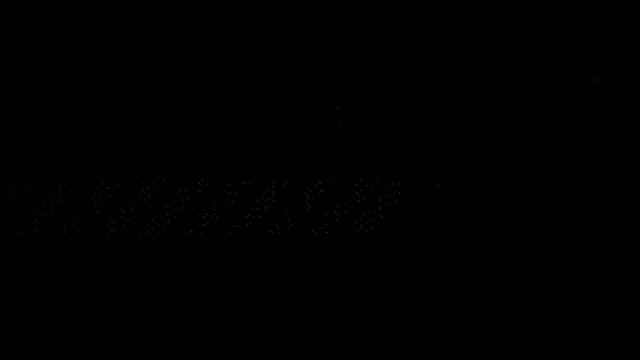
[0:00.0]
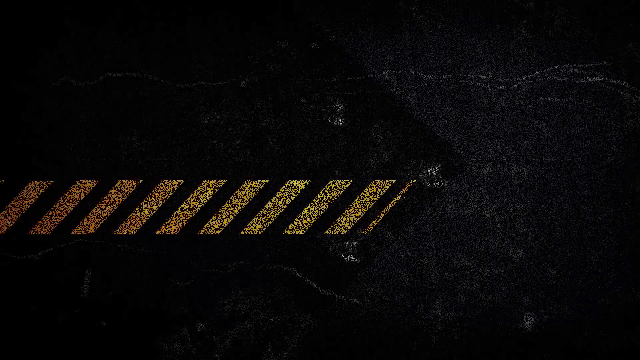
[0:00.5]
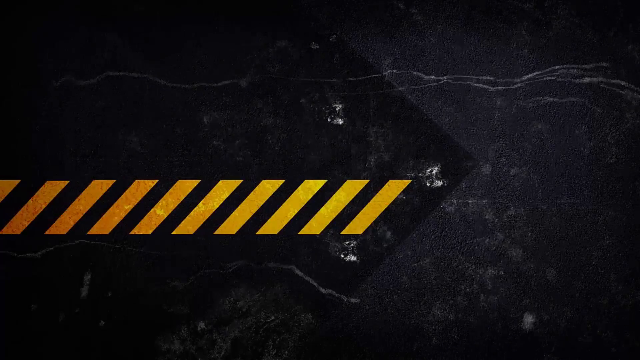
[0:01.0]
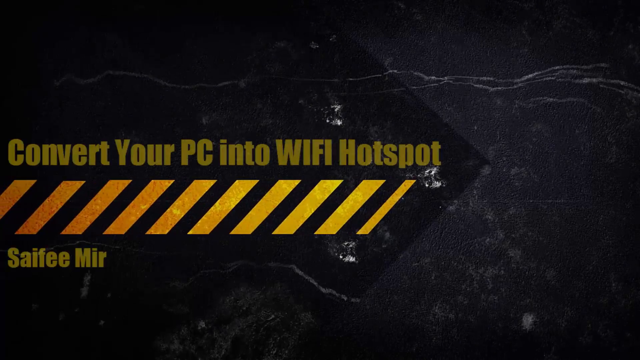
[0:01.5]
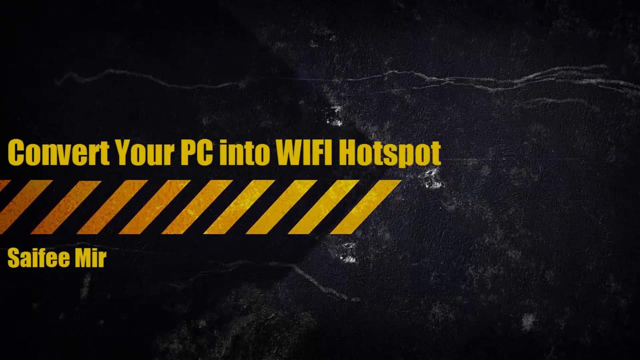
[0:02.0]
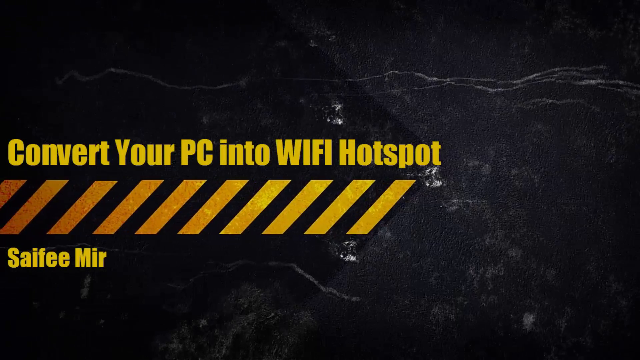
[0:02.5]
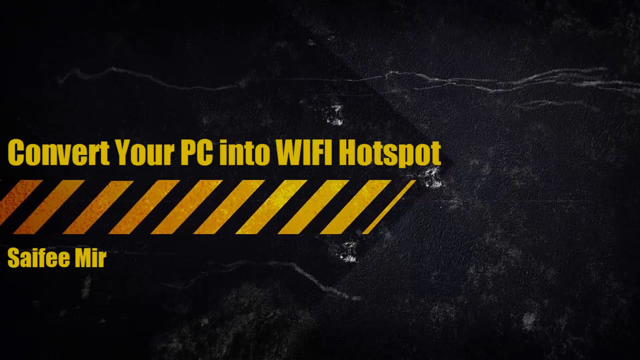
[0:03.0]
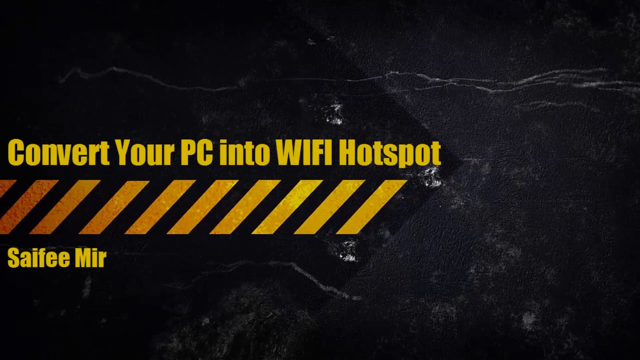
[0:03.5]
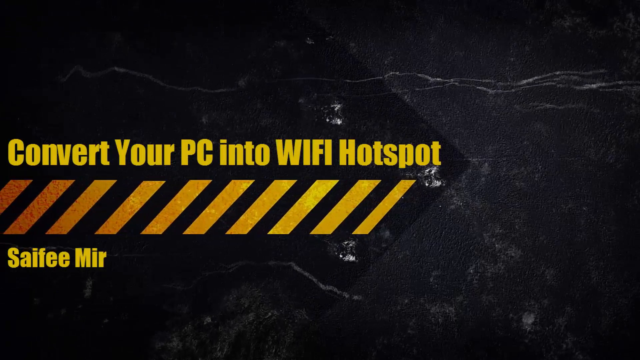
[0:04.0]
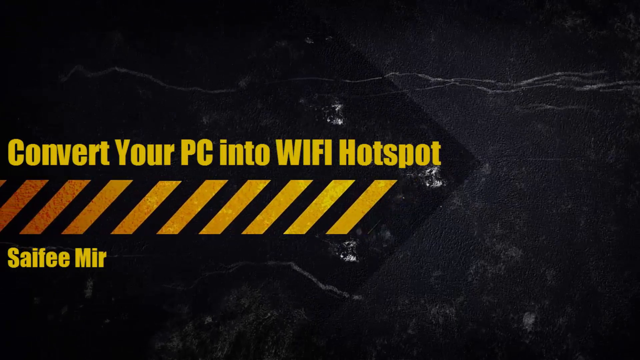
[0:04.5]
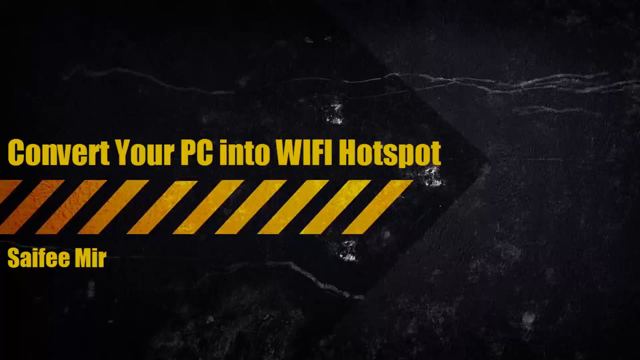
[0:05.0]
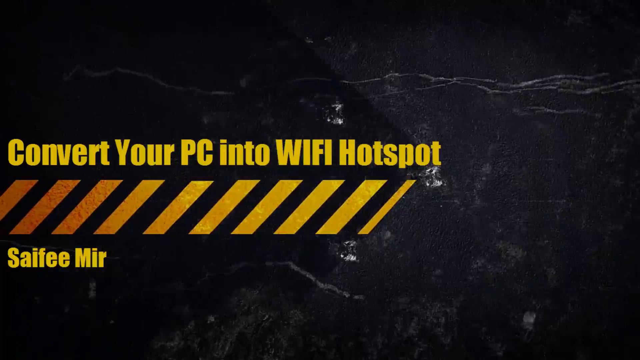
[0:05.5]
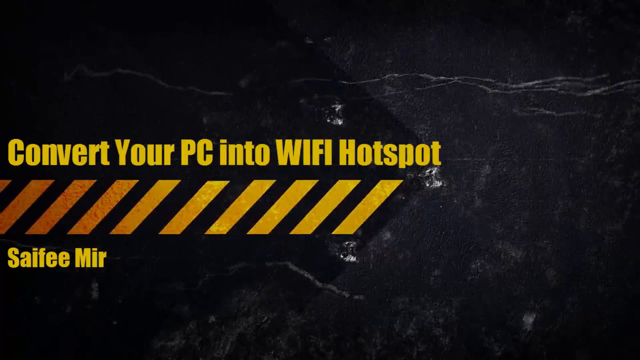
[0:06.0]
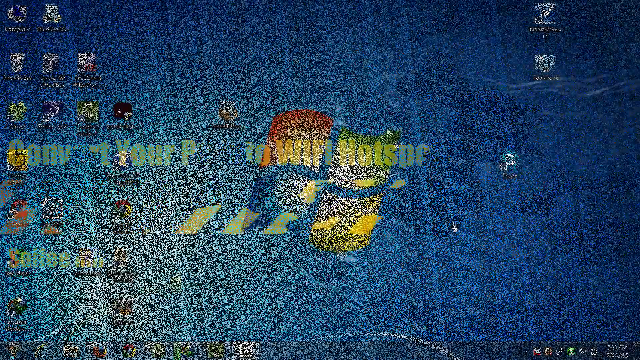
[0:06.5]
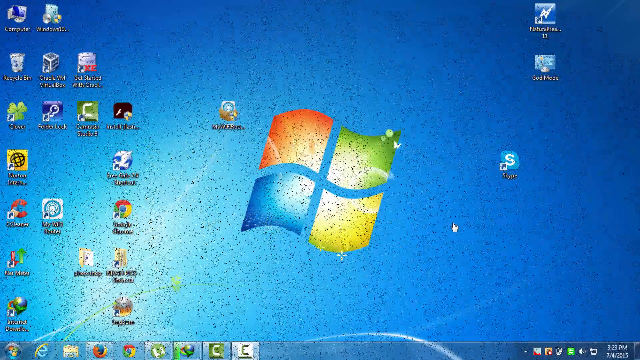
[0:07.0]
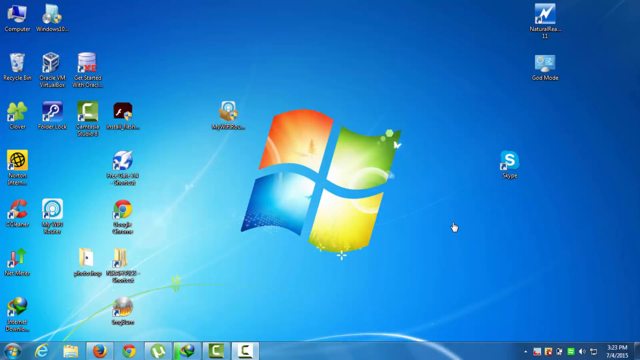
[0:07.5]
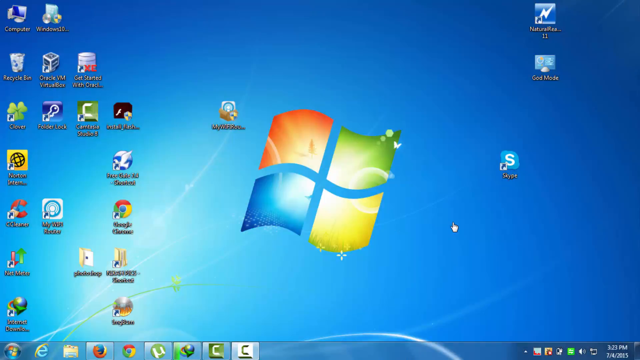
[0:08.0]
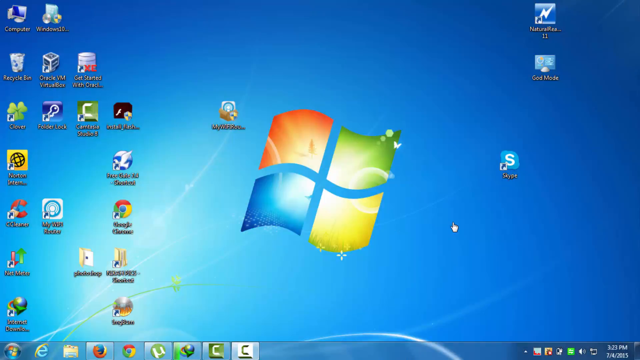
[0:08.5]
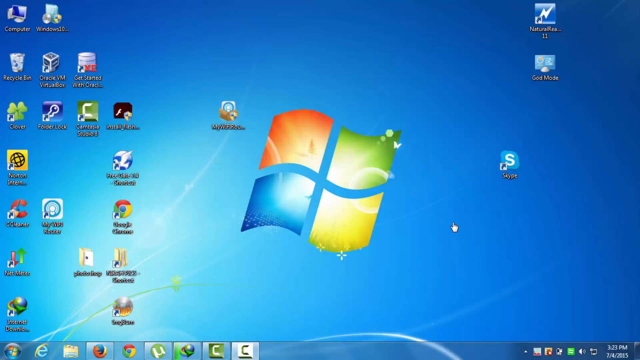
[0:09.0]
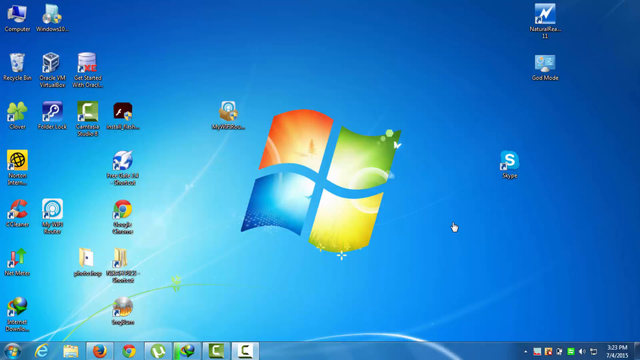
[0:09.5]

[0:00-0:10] The video opens with an introduction, a preview of how to connect a PC as a Wi-Fi hotspot.